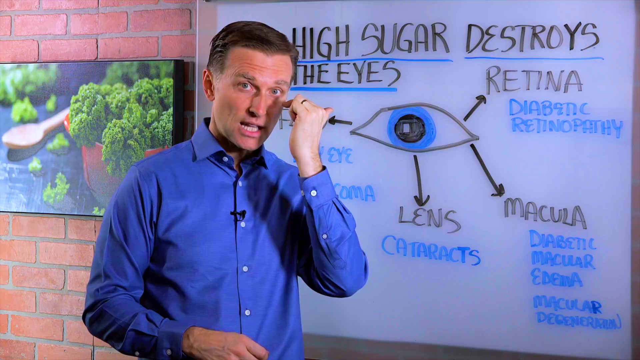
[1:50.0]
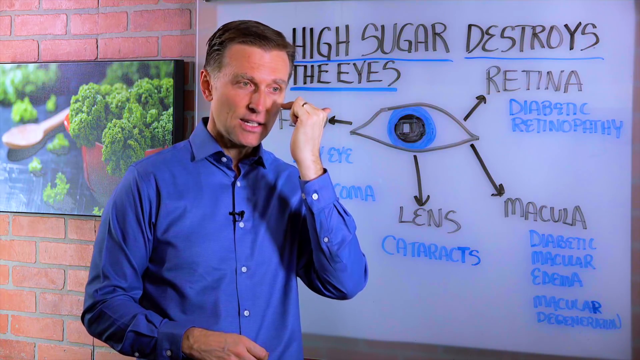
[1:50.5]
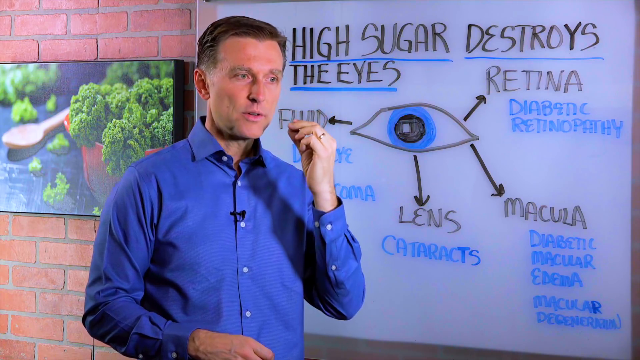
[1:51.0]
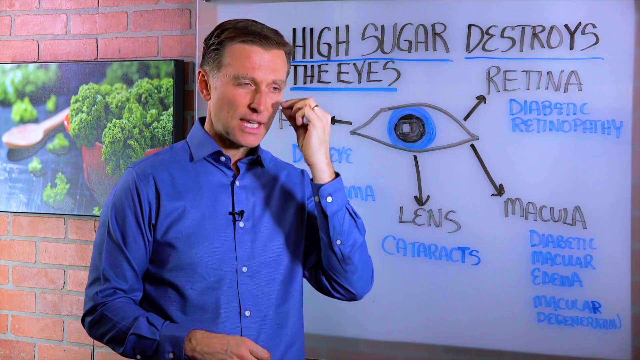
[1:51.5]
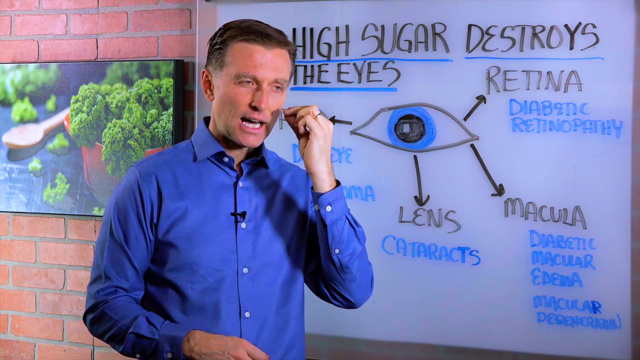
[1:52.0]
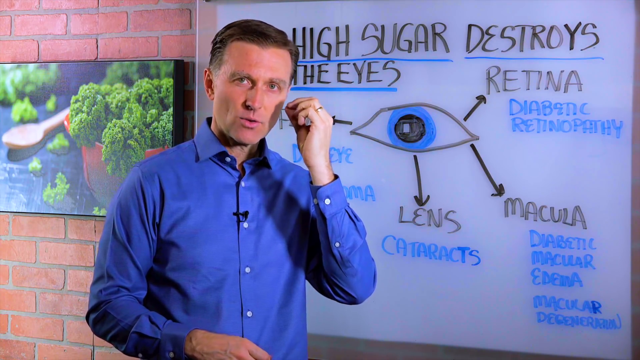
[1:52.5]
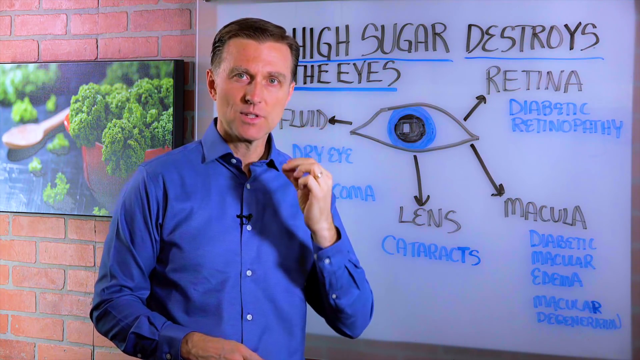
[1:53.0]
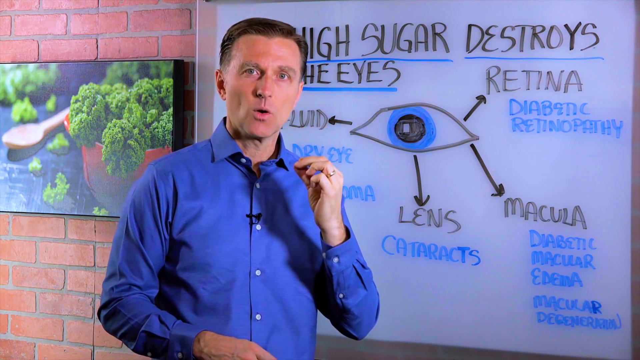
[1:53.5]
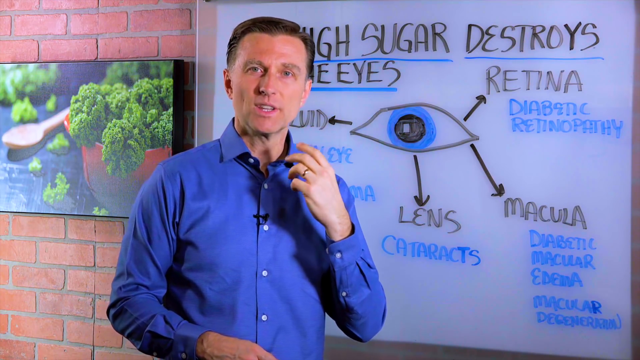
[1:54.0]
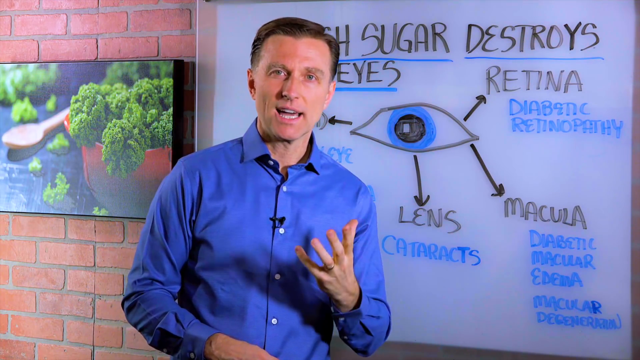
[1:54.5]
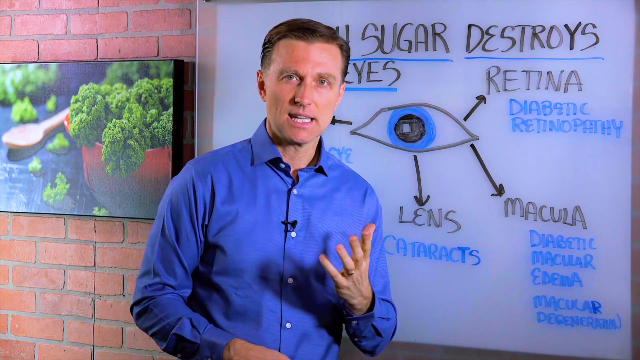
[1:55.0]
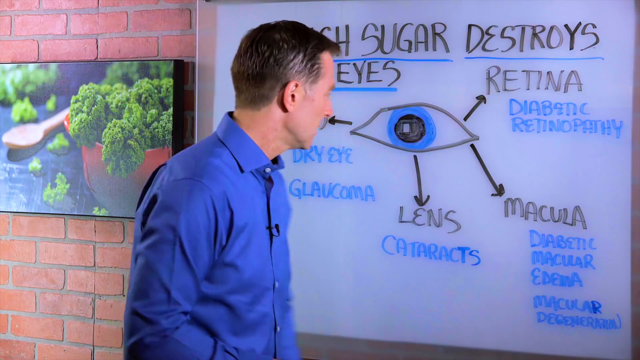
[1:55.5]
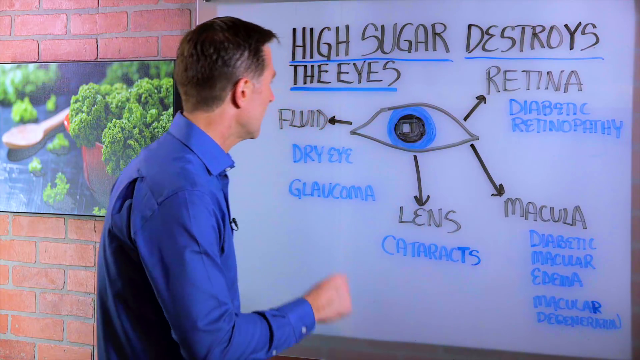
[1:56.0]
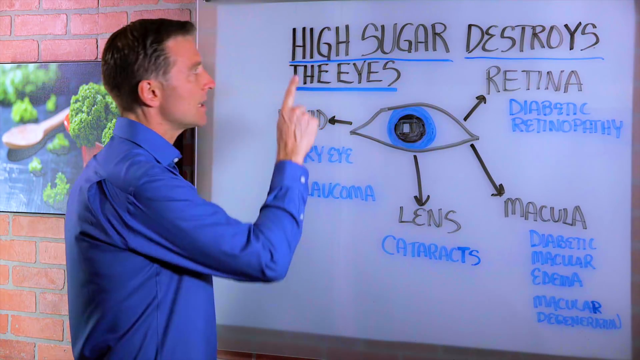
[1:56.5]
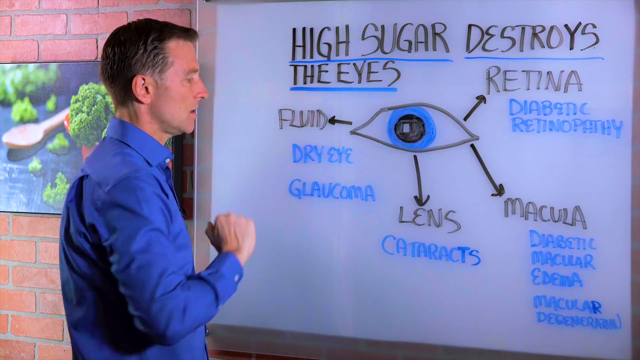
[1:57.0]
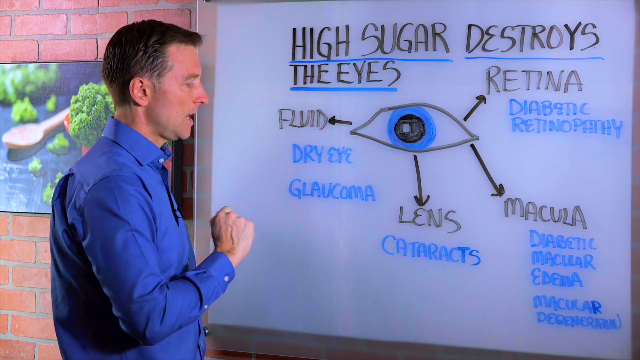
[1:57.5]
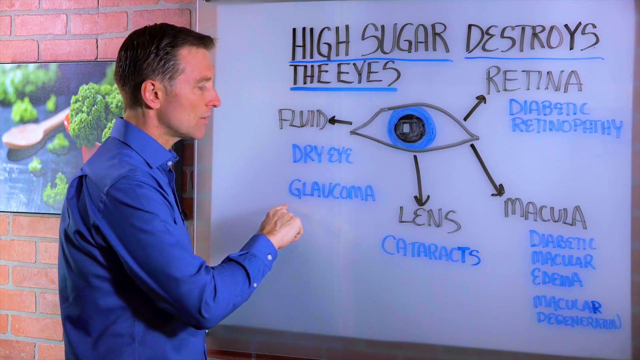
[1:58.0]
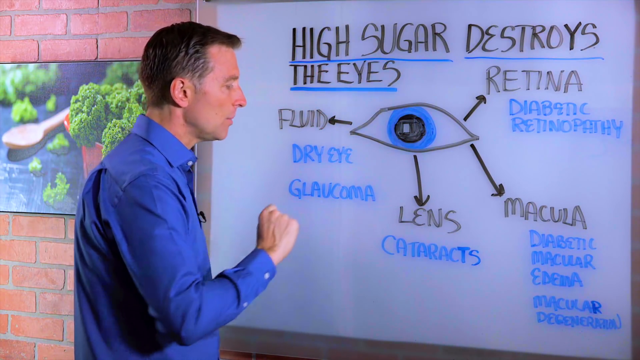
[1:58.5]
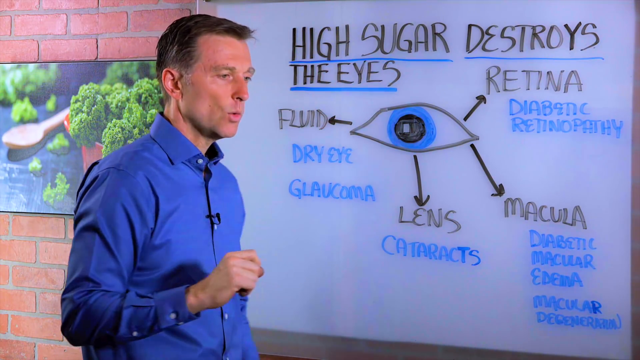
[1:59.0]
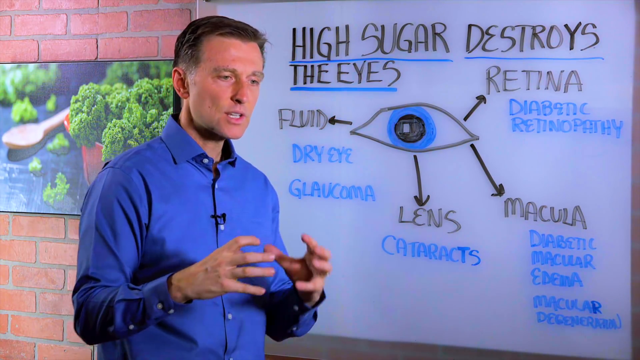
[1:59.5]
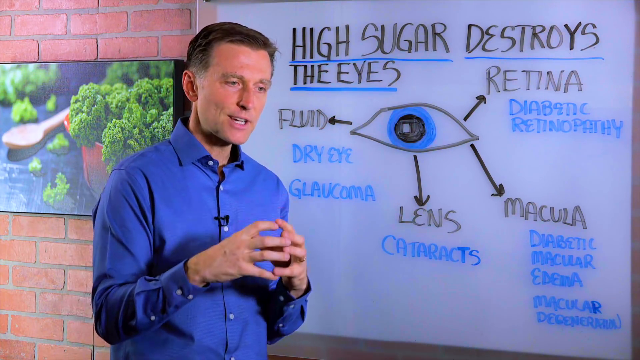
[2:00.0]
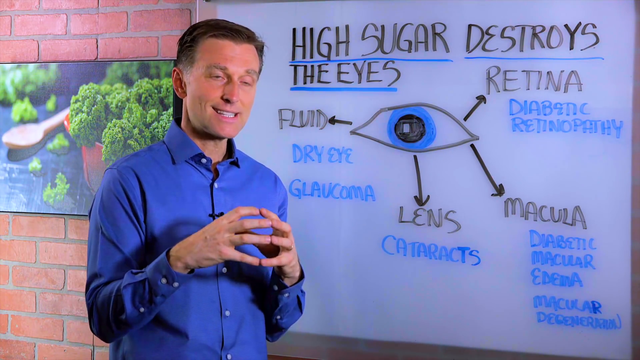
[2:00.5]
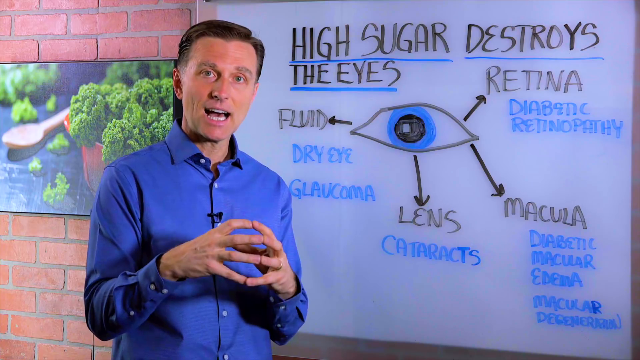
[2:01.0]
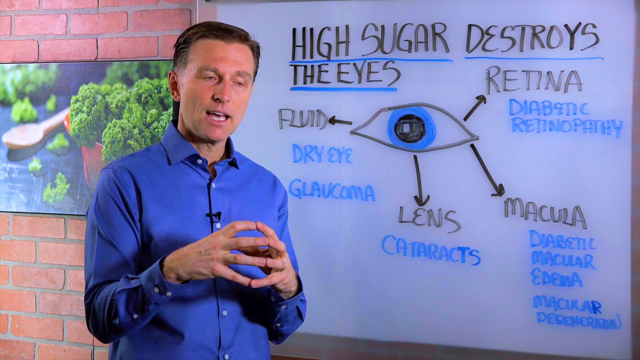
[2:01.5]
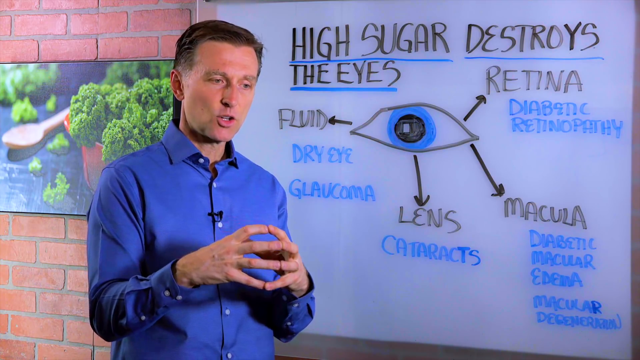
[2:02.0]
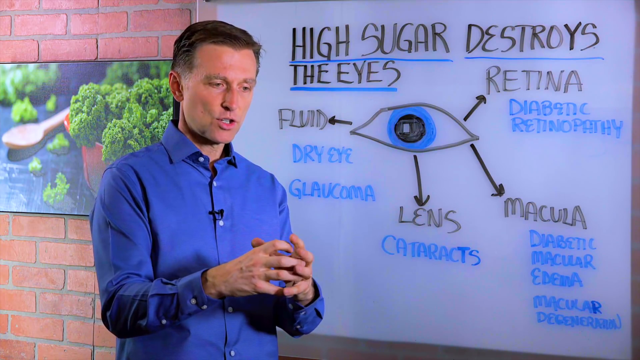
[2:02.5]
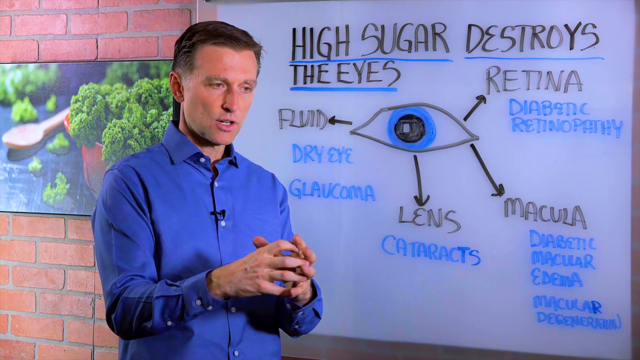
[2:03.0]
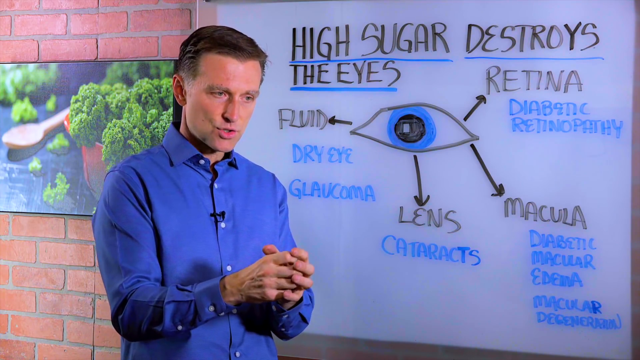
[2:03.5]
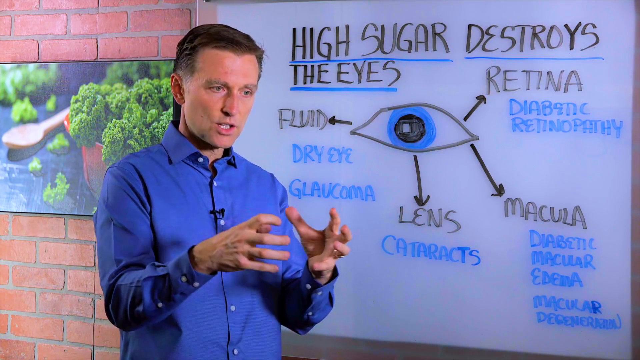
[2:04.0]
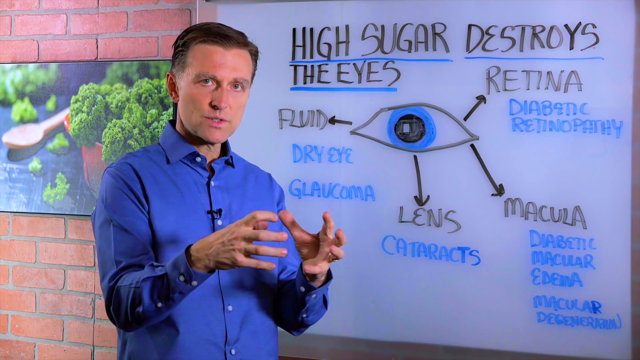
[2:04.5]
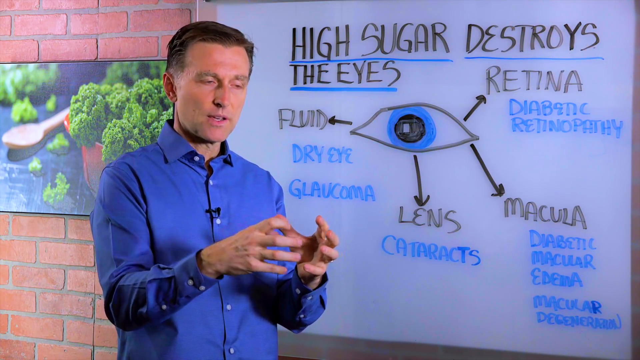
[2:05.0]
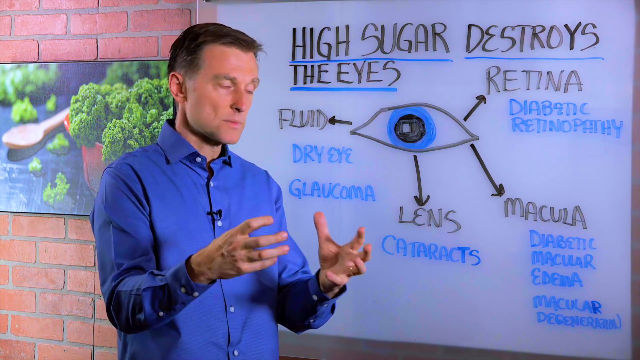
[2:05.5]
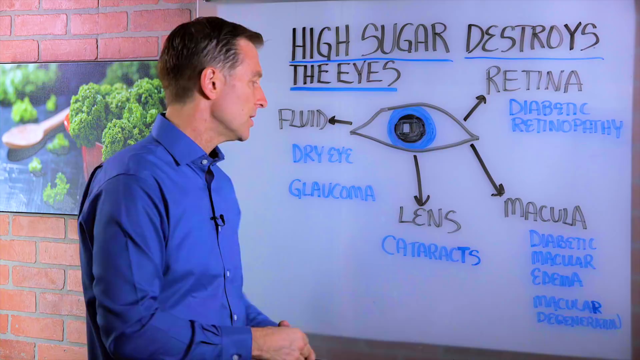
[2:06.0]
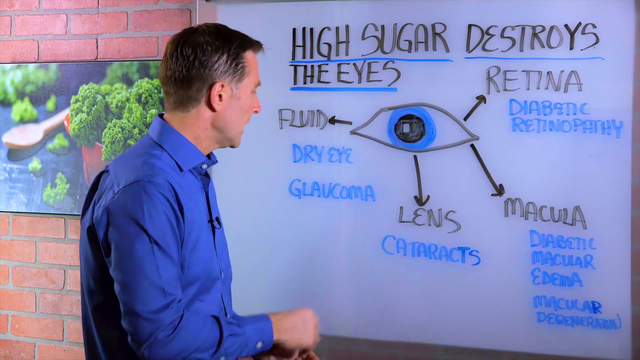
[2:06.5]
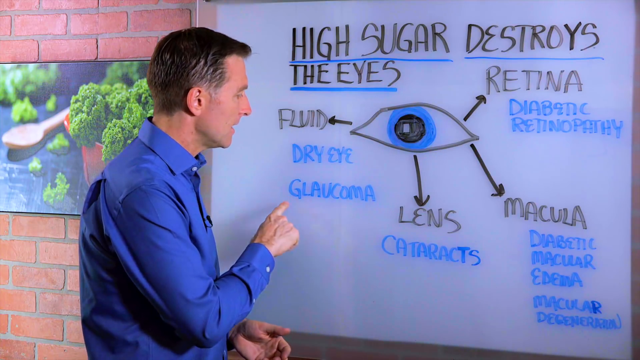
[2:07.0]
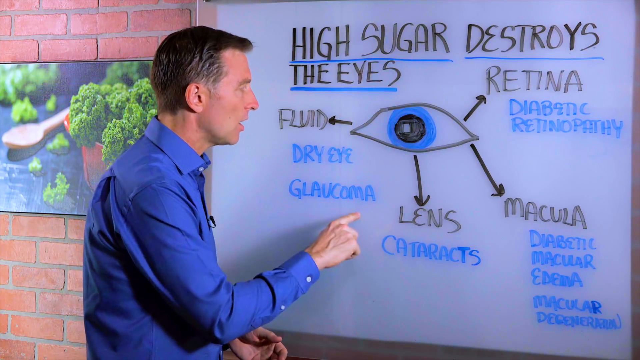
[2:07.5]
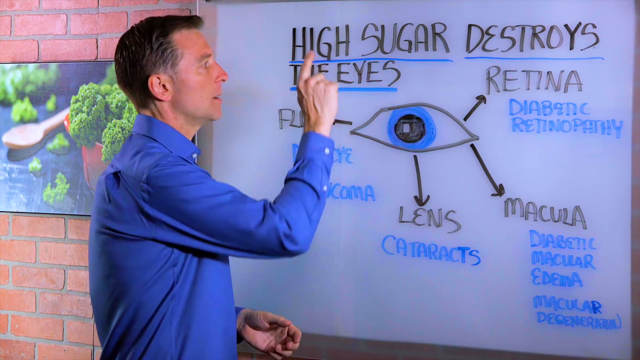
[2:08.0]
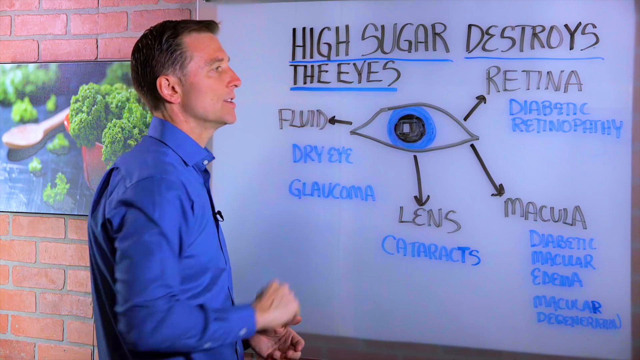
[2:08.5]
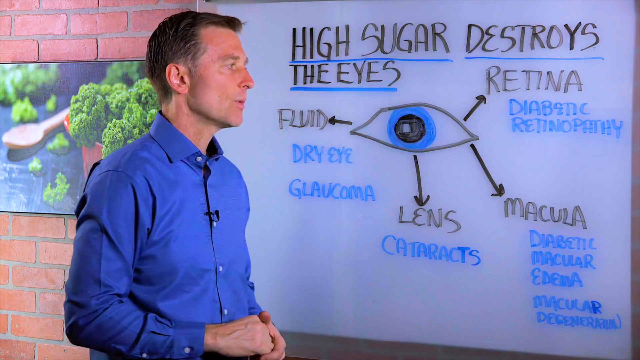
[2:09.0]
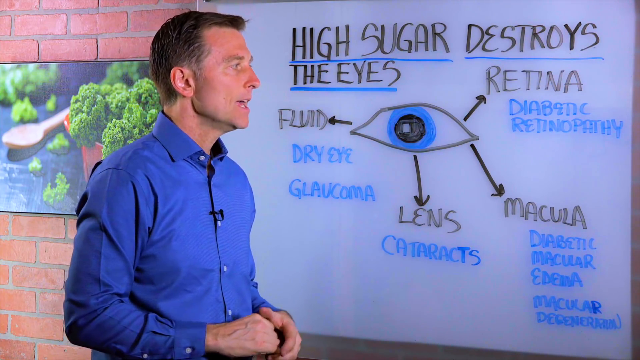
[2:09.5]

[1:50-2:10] Dr. Berg, with short dark brown hair and a tan, Caucasian, wears a blue button-down professional shirt with the collar open. His left hand points to his left eye with his elbow bent, and a wedding band is visible on his ring finger. Looking at the camera, he uses his own eye as an example. He turns to his left and his right hand comes up to tap the words "high sugar." Still looking at the board, he turns again with his hands grasping each other, points to the word "glaucoma," and immediately points with his right hand to "high sugar," as if showing a relationship between glaucoma and sugar.